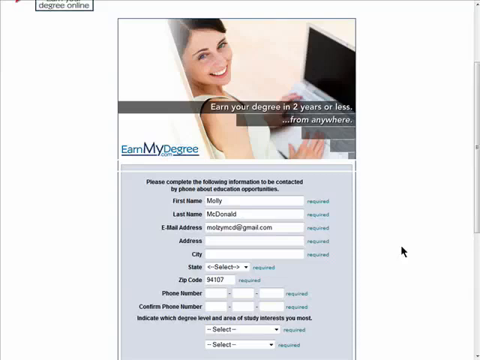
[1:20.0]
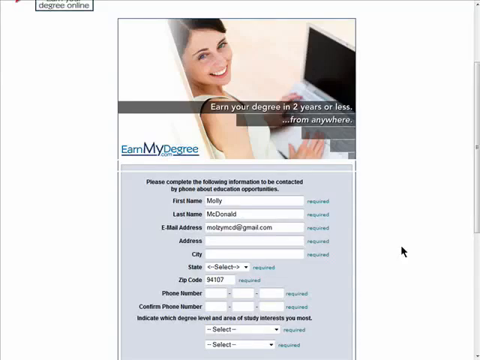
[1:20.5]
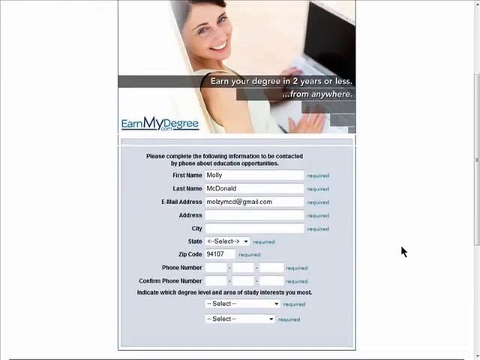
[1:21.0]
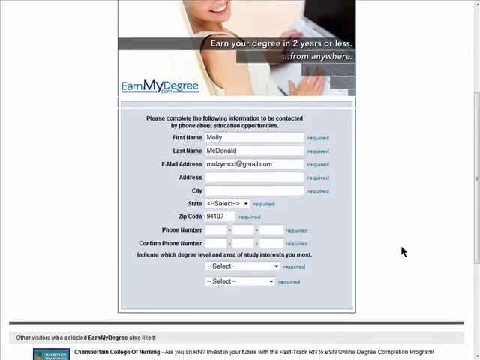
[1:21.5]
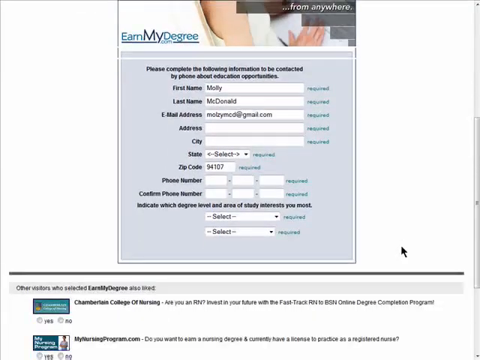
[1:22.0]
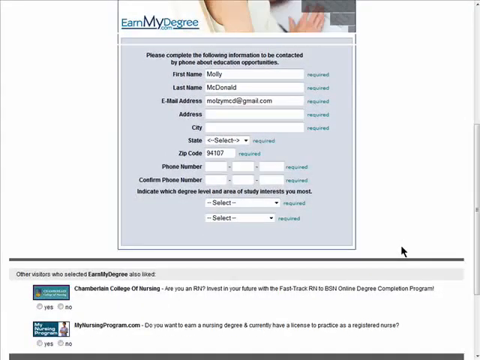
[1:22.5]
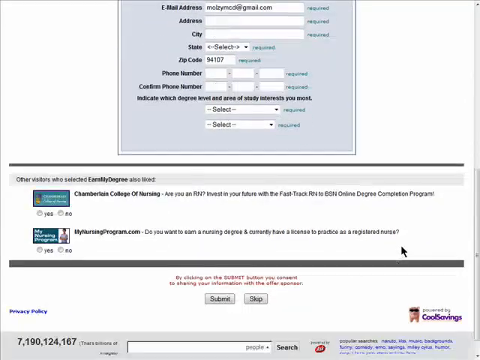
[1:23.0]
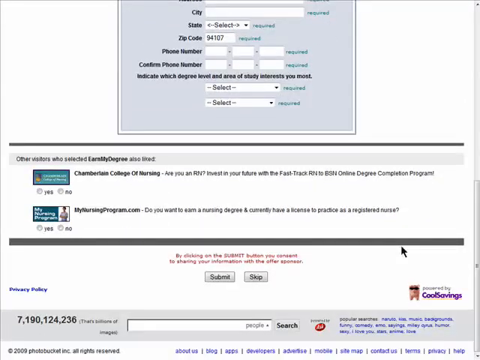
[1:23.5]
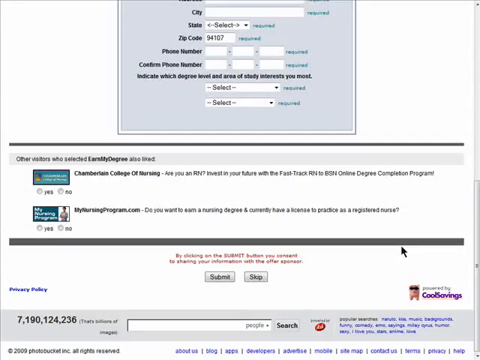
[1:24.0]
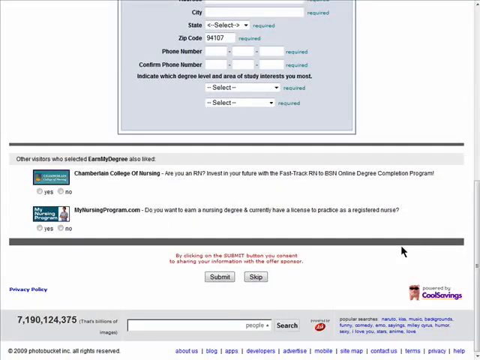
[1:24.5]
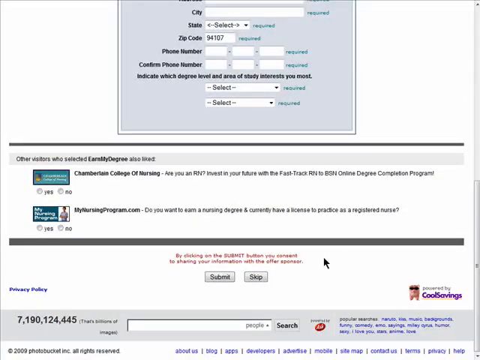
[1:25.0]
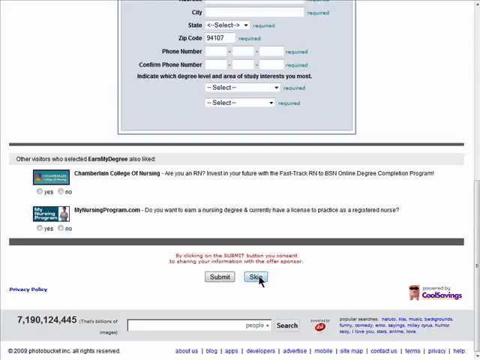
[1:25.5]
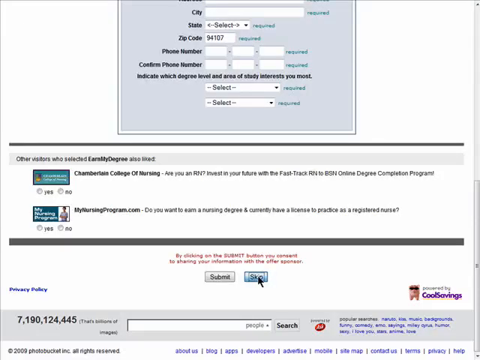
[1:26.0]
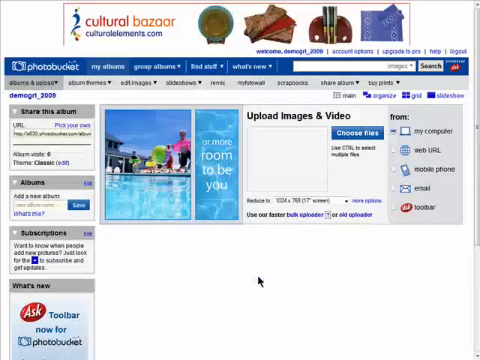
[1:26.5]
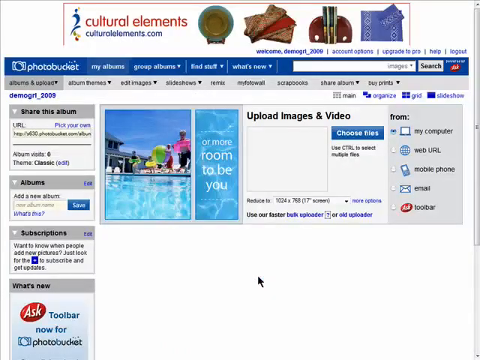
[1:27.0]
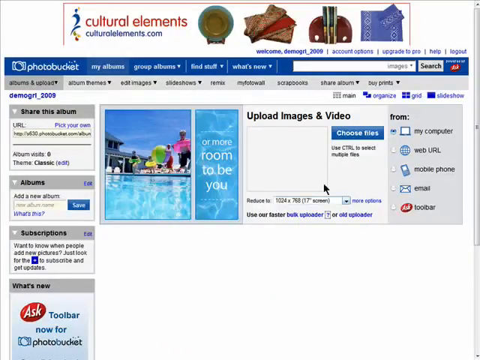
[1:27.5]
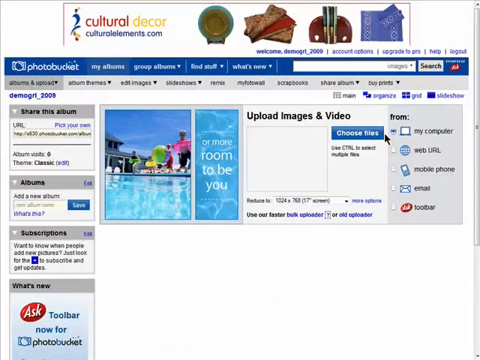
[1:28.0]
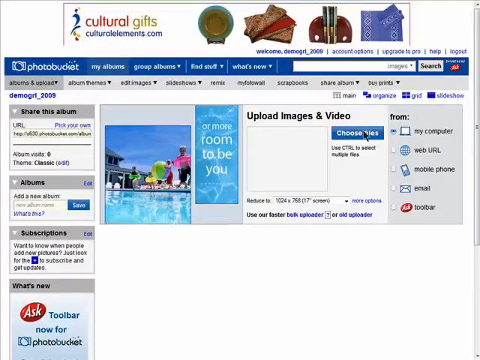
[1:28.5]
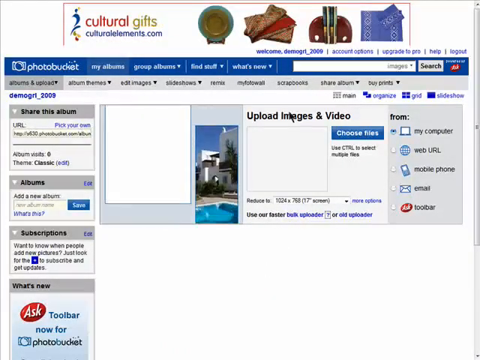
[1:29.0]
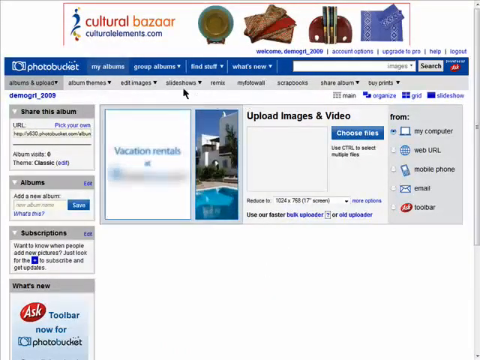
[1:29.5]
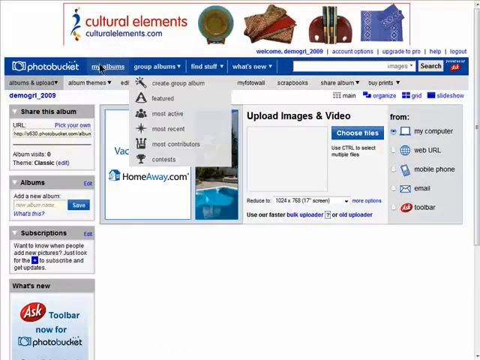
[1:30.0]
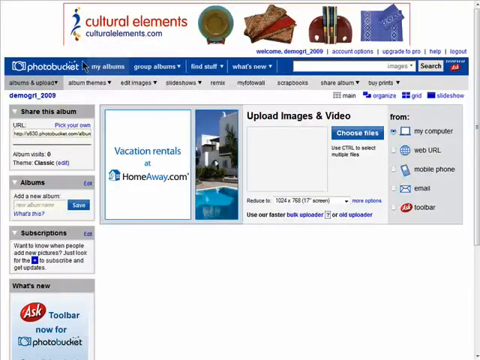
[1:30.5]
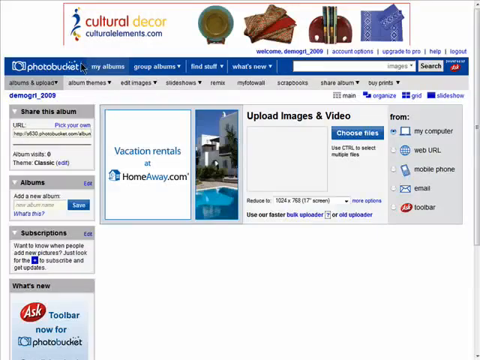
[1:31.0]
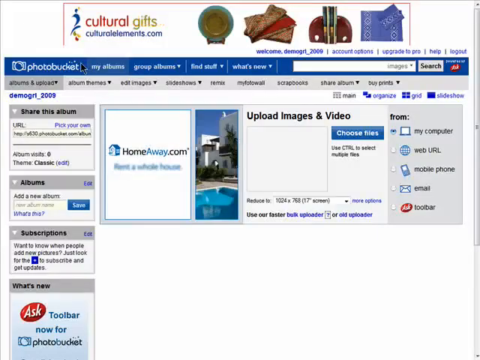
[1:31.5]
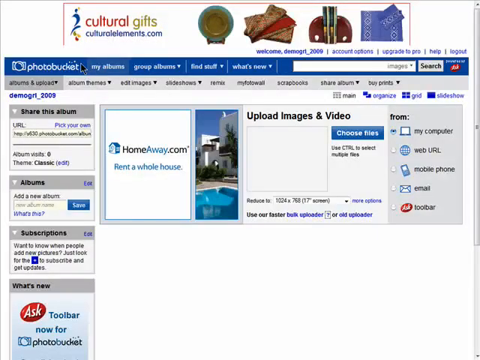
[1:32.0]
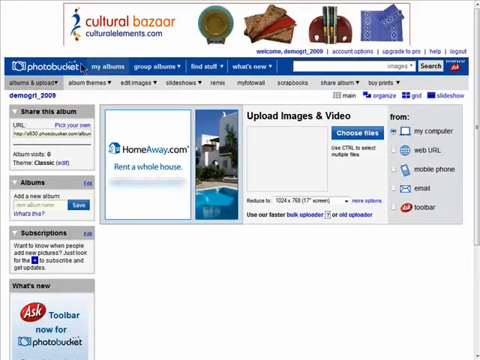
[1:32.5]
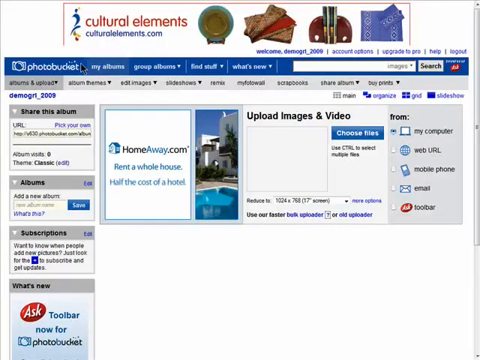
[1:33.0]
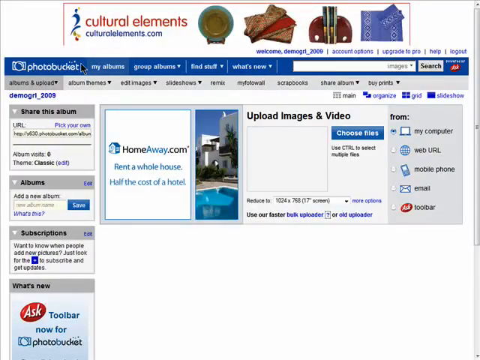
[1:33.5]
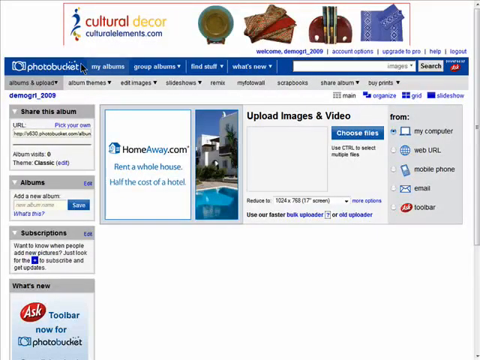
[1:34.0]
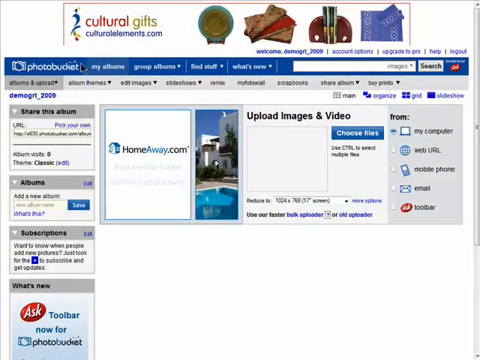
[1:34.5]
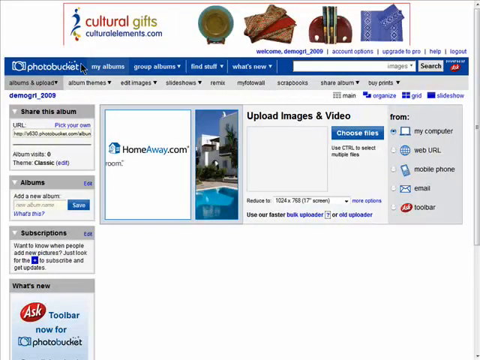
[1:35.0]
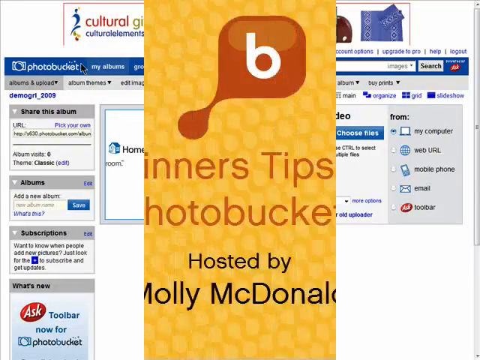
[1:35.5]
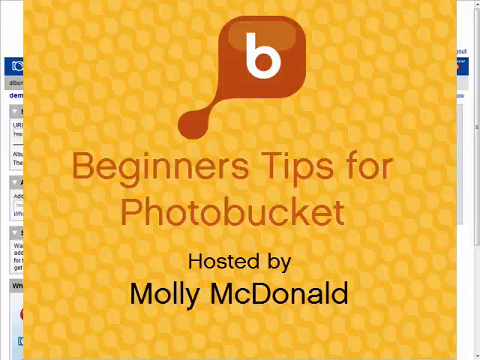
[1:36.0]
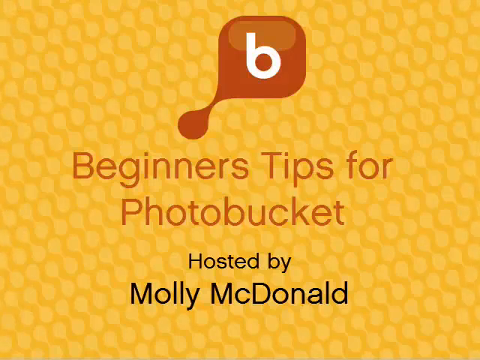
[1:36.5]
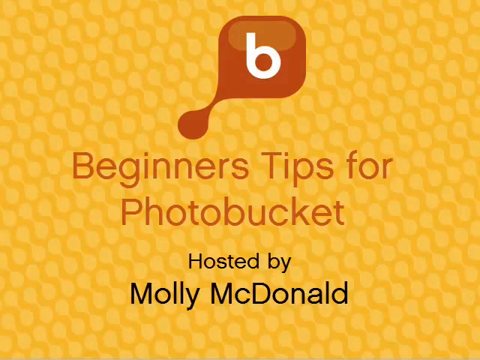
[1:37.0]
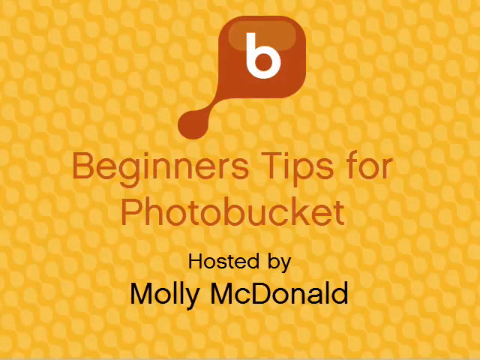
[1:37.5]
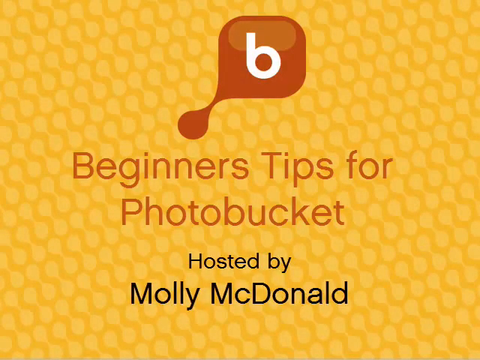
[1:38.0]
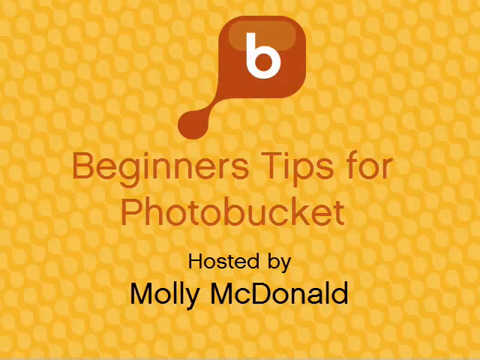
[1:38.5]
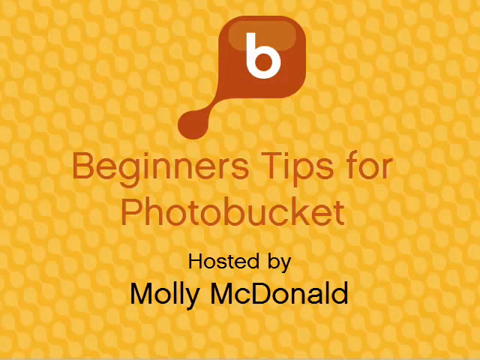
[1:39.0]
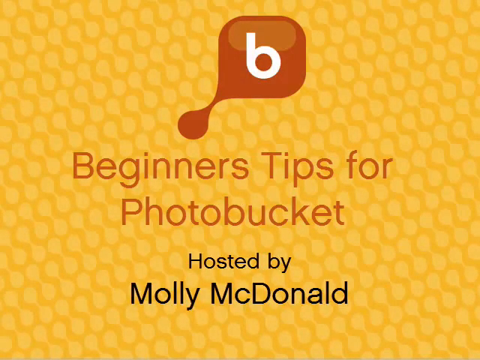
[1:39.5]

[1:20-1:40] A white background shows a banner reading "earnmydegree.com, earn your degree in two years or less from anywhere," with a woman smiling while on the computer. Text reads "please complete the following information to be contacted by phone about education opportunities." The form is prefilled with first name Molly, last name McDonald, and email address mollymcdonald.gmail.com; the address, city, and state fields are empty, the zip code is filled in with 94107, and the phone number and confirm phone number fields are blank. The user scrolls down to more text reading "indicate which degree level and area of study interests you most," and a section of other visitors who selected earn my degree also clicked, with offers for Chamberlain College of Nursing and mynursingprogram.com. The user clicks the skip button, which leads to a Photobucket page reading "upload images and video," with the ability to choose files and use control to select multiple files, and options to upload from my computer, web URL, mobile phone, email, or the ask toolbar. Options on the left include sharing the album and some new features. The mouse goes up to the Photobucket main bar and stays there. The scene then transitions to the yellow honeycomb background with a brown box of white text of a bee, and brown and black text reading "Beginner's Tips for Photo Bucket hosted by Molly MacDonald."